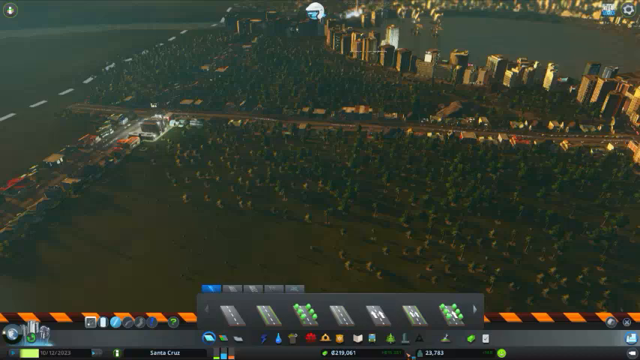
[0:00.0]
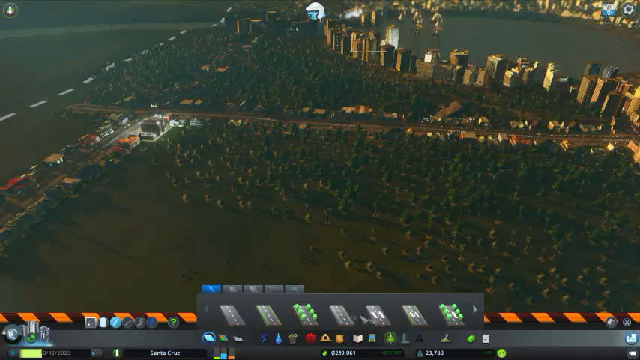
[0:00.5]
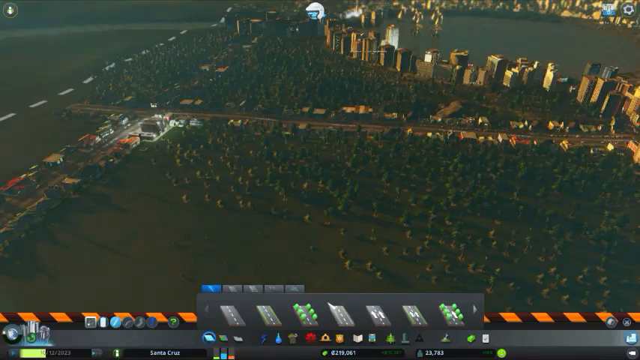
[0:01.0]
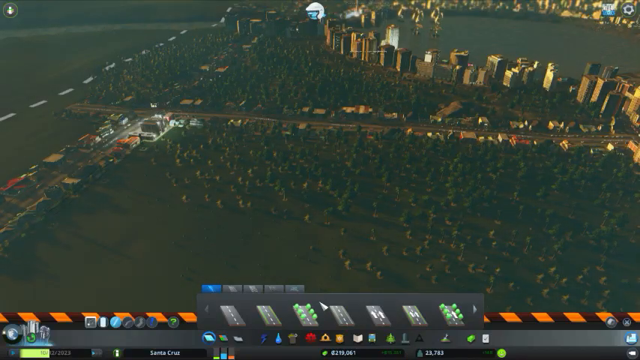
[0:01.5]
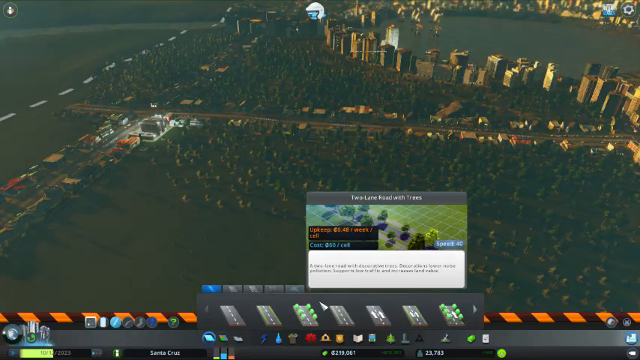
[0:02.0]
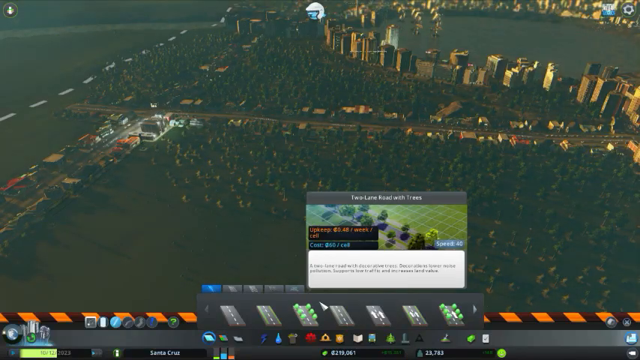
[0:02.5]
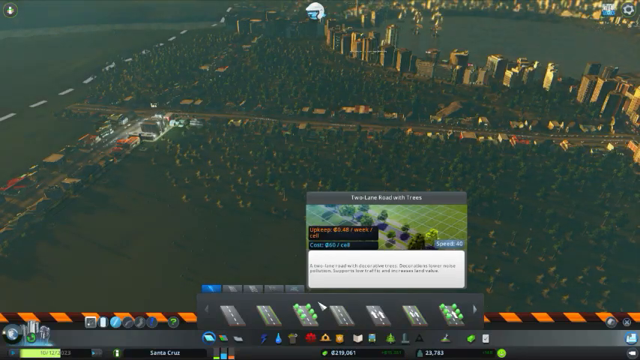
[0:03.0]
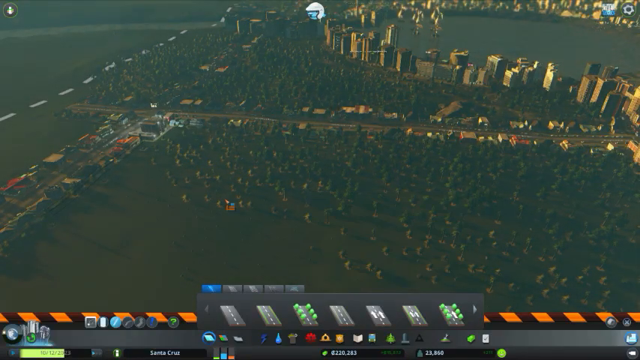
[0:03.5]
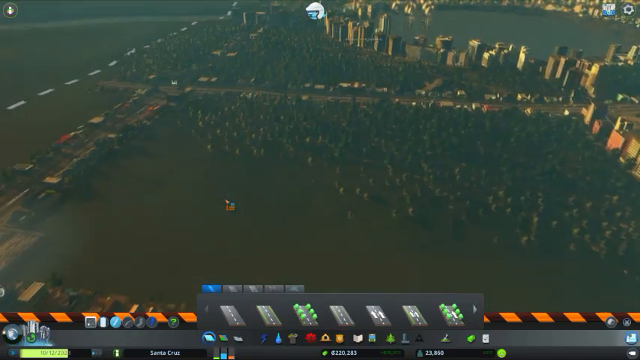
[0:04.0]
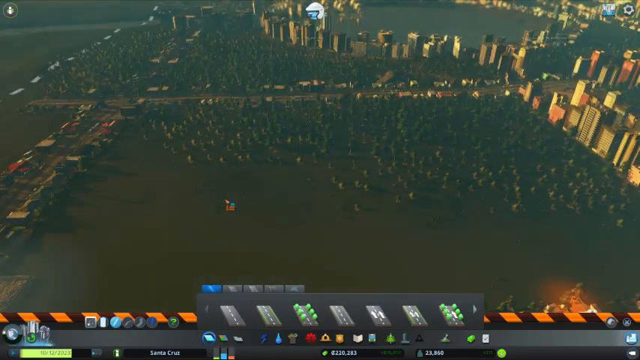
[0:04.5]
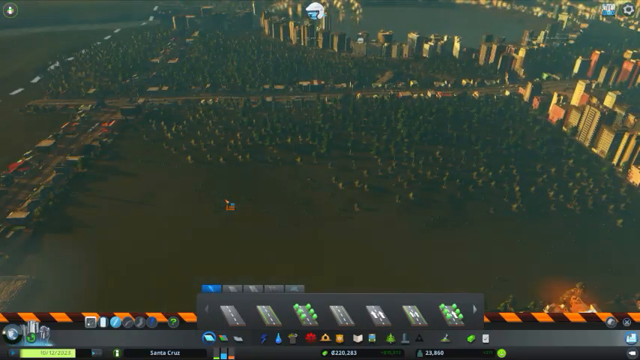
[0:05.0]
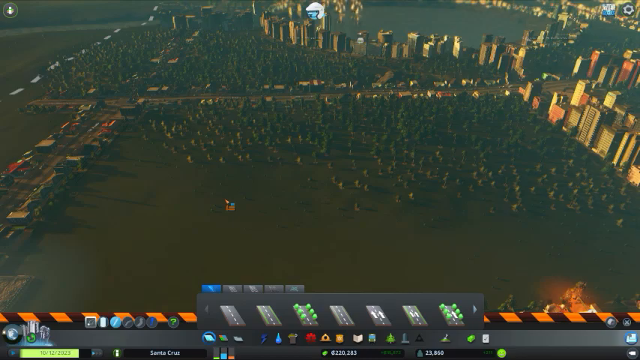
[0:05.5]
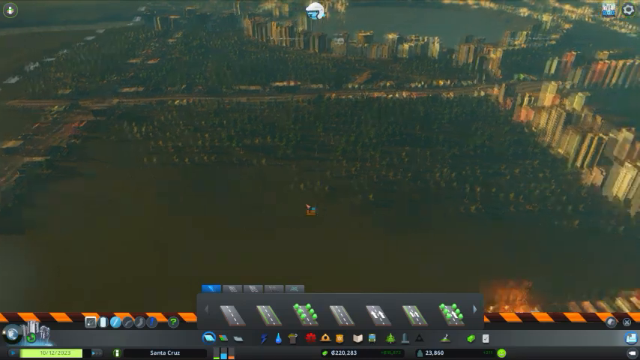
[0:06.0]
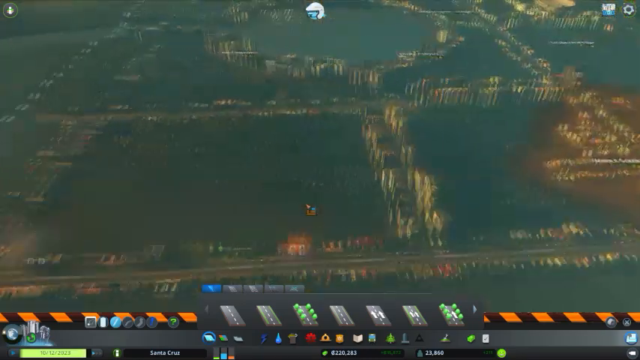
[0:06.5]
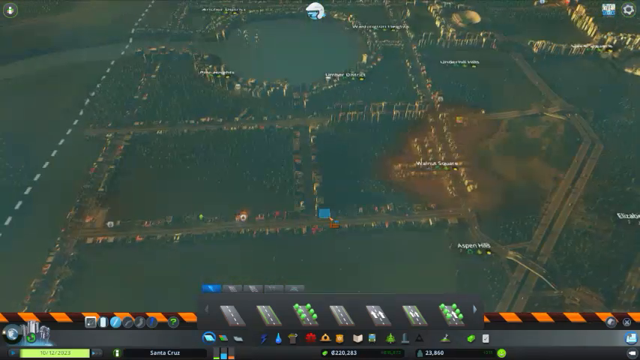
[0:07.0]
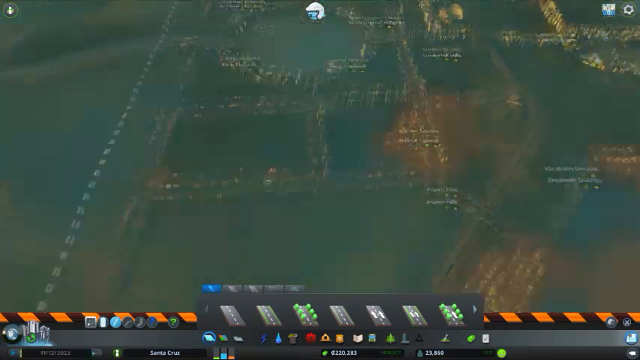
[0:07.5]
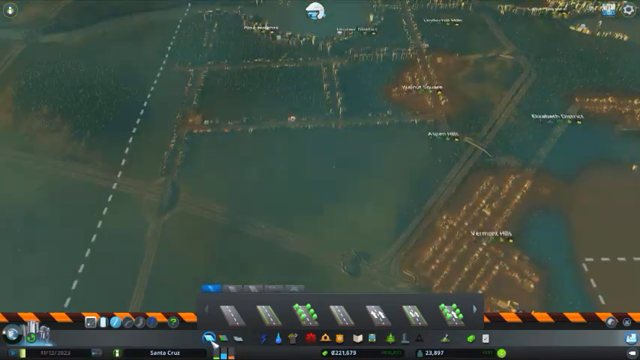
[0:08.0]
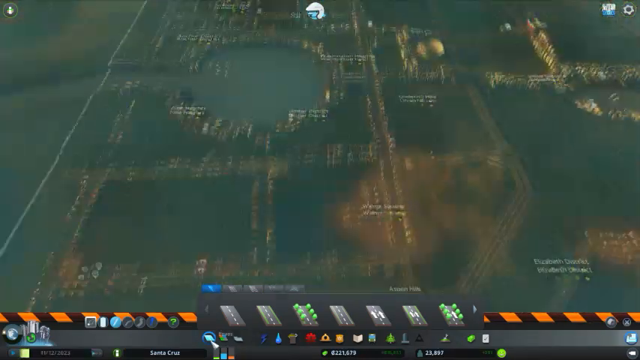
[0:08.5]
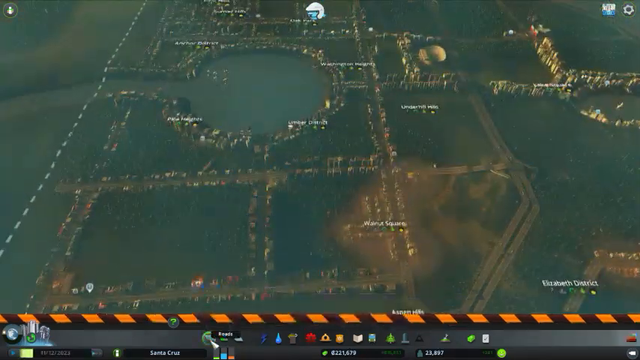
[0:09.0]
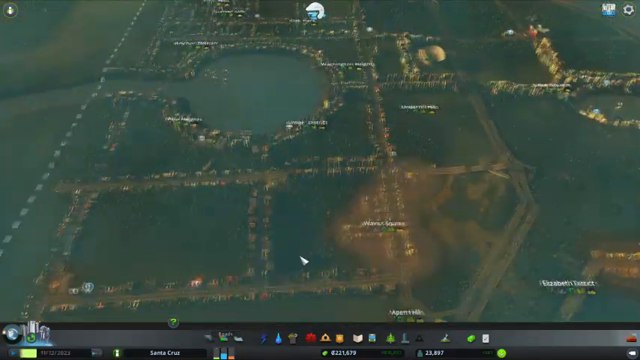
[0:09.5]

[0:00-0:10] The view is inside a game. In the background there is a lot of very green land, and across the bottom half many trees poke out from the ground. On the far left is a small town-like area with the rooftops of many buildings in white, red and orange, and lights are displayed on a very large building at the middle left. The buildings are arranged in lines: one line on the left, a road in between, and another line on the right. The top half shows more forested area and a lot of grass, while at the top right there are even larger buildings forming a city landscape, and there appears to be a large body of water at the top right as well. Along the bottom, options for different types of roads pop up: roads with white lines going beneath them, roads with white lines in the middle and green on the sides, roads with trees on the sides, and roads with arrows painted on them. A pop-up appears reading "two-lane road with trees", showing an image of trees on the left and right sides of a grayish road. The person then moves the mouse and zooms outwards, giving an even higher aerial view of the landscape.